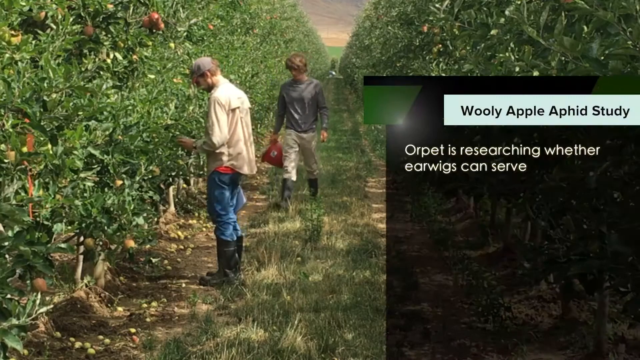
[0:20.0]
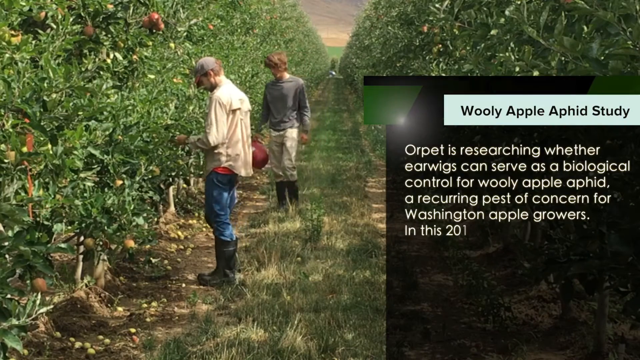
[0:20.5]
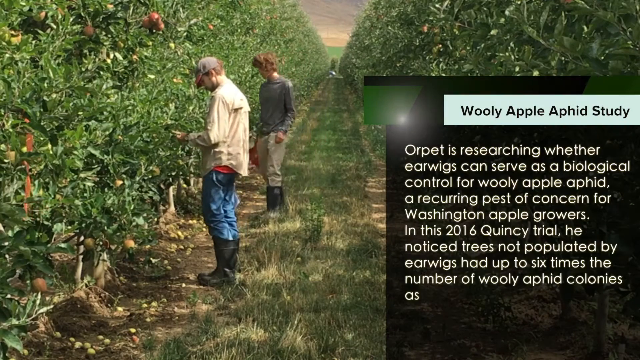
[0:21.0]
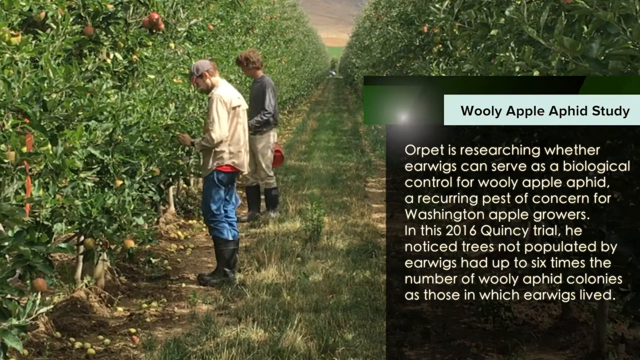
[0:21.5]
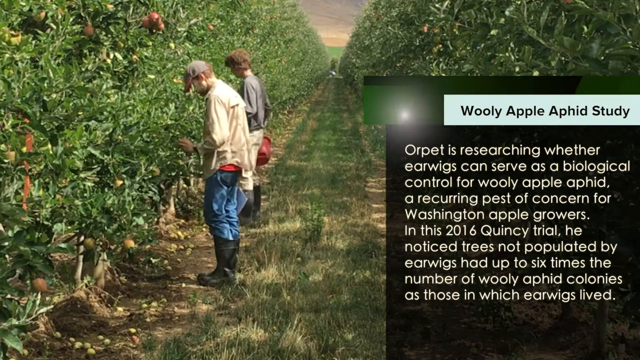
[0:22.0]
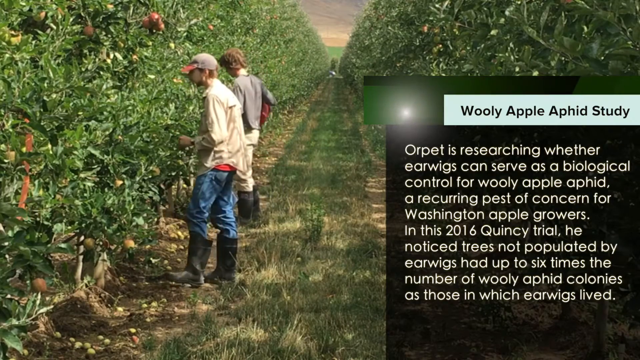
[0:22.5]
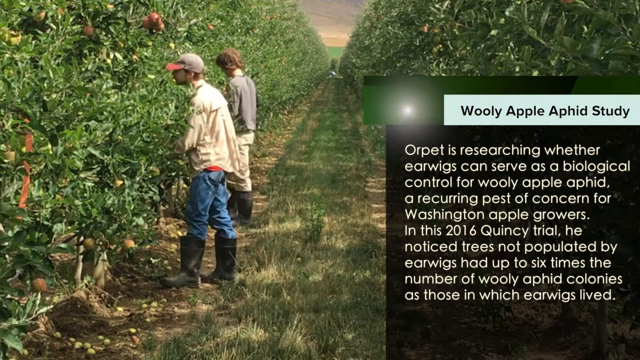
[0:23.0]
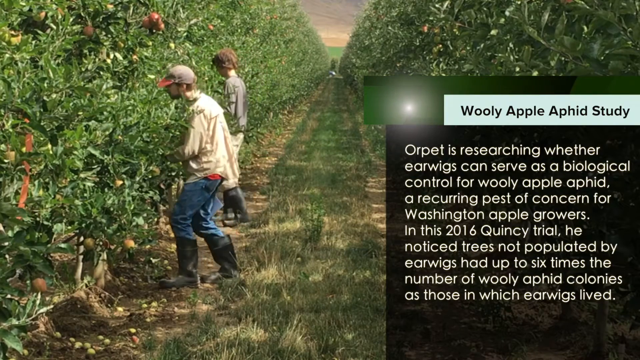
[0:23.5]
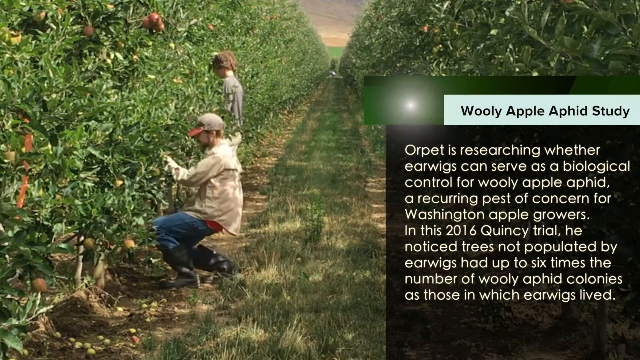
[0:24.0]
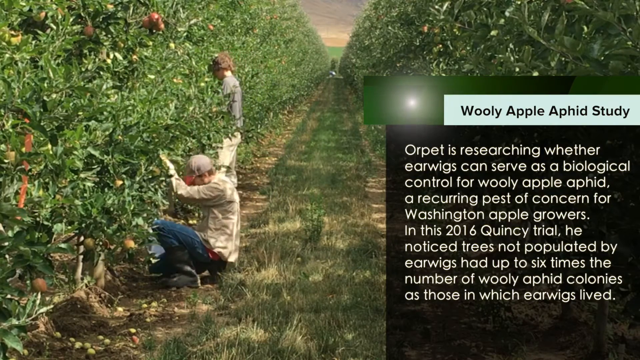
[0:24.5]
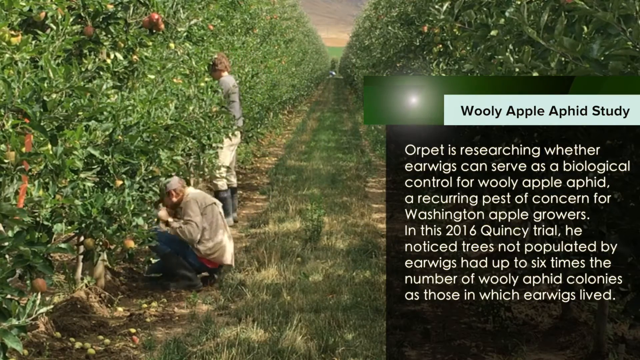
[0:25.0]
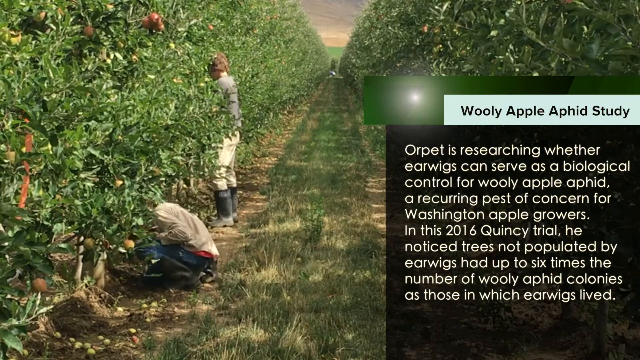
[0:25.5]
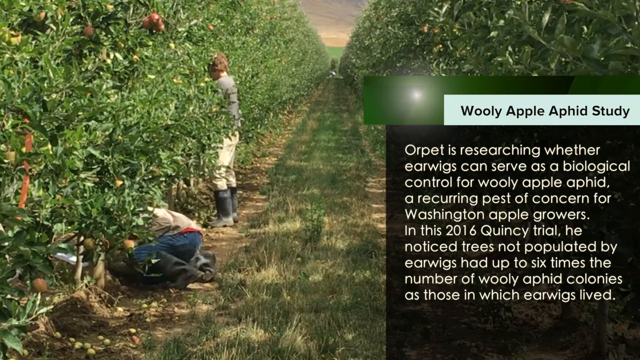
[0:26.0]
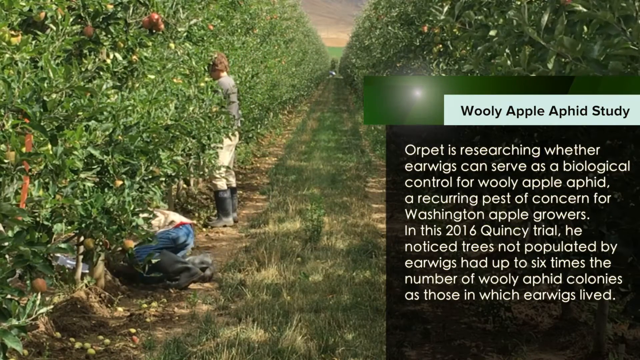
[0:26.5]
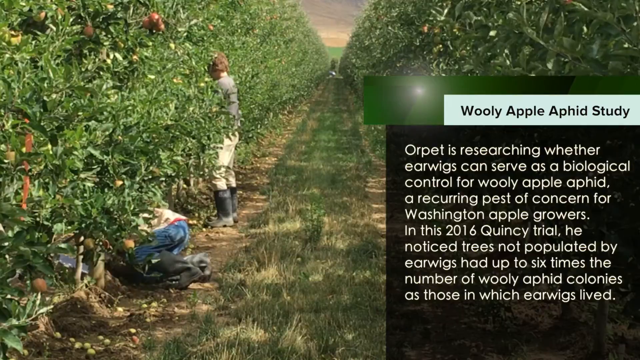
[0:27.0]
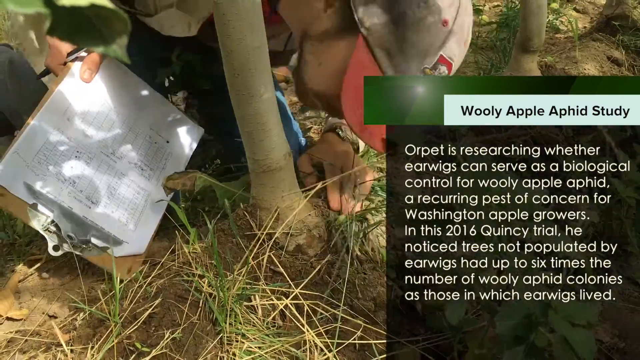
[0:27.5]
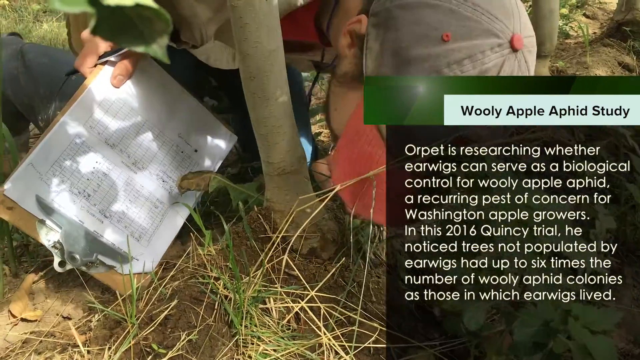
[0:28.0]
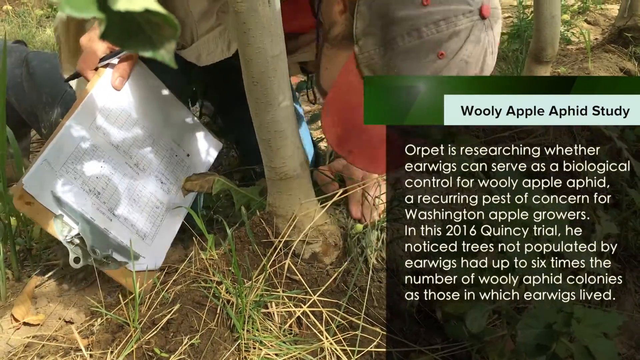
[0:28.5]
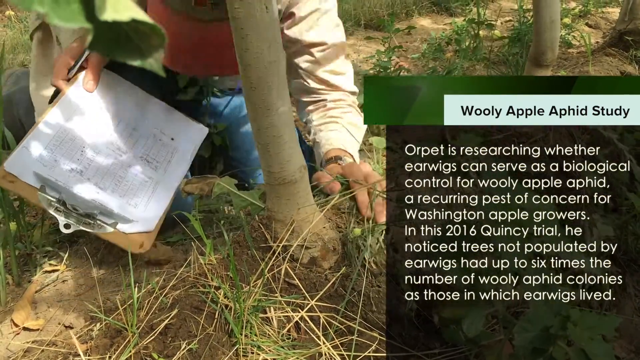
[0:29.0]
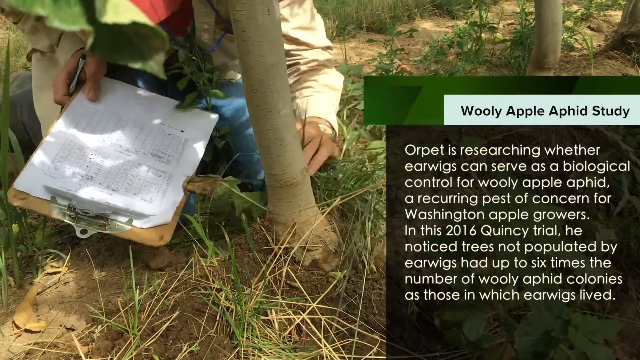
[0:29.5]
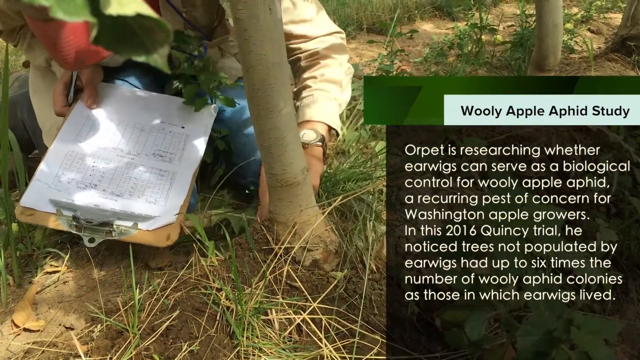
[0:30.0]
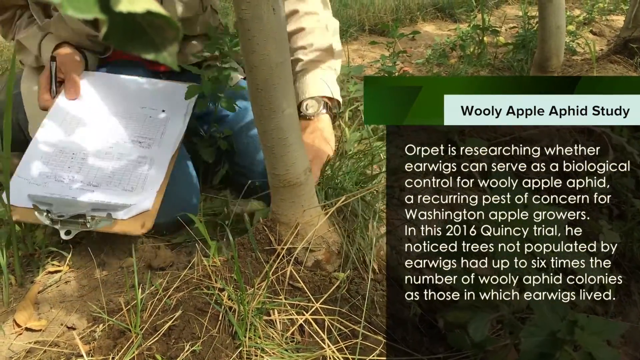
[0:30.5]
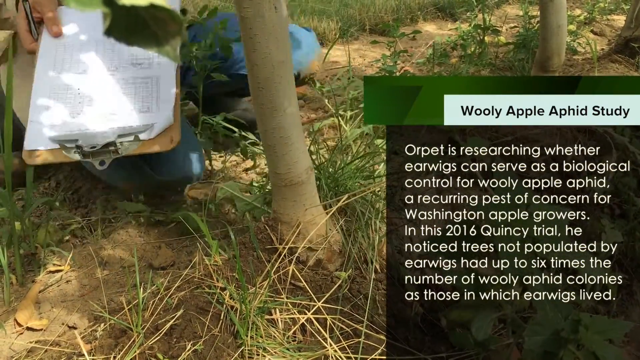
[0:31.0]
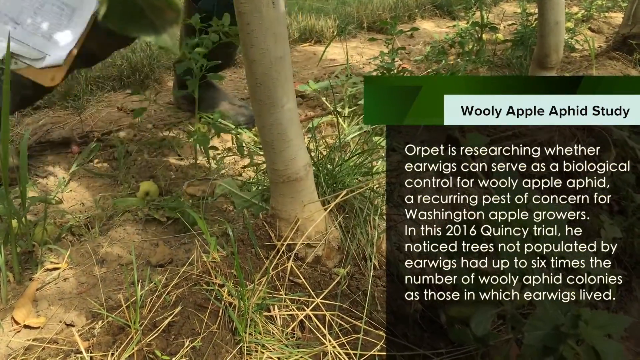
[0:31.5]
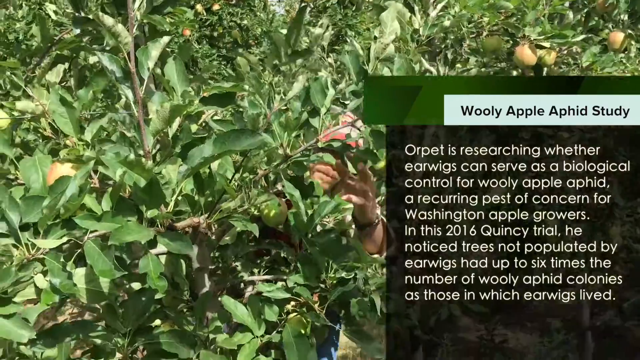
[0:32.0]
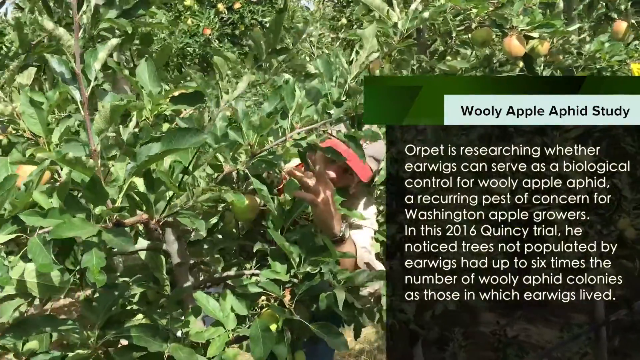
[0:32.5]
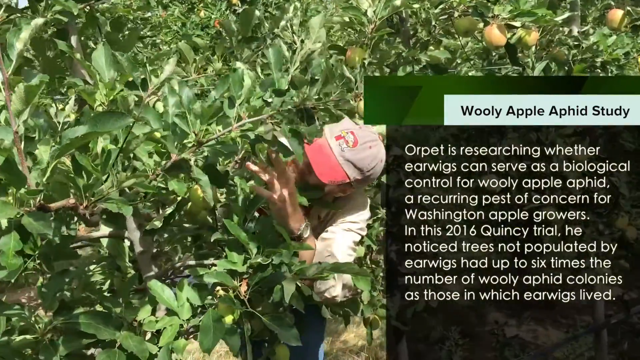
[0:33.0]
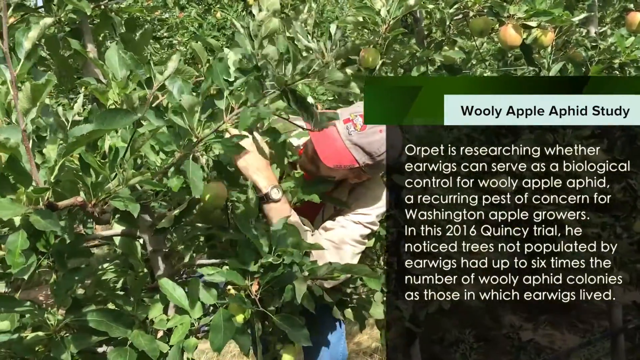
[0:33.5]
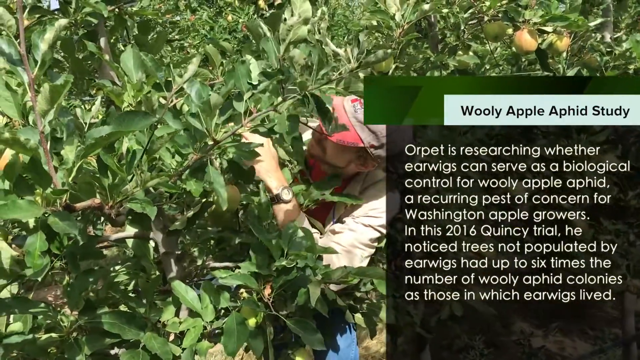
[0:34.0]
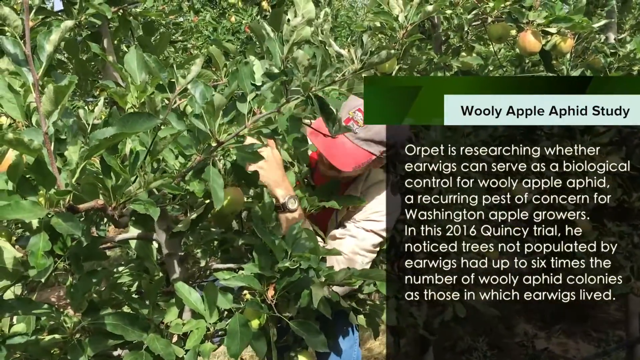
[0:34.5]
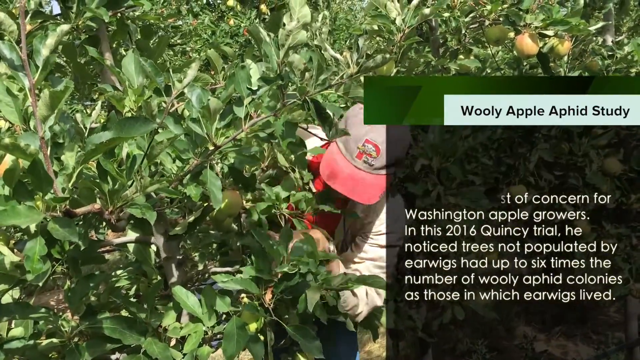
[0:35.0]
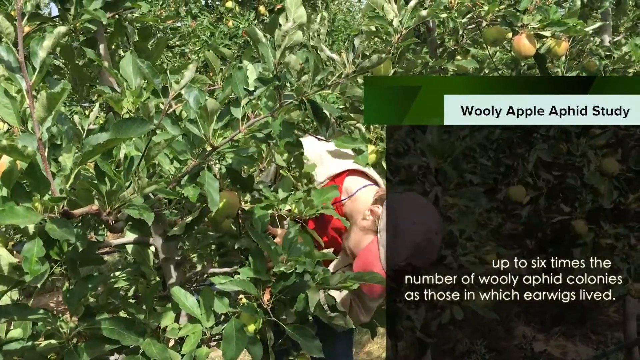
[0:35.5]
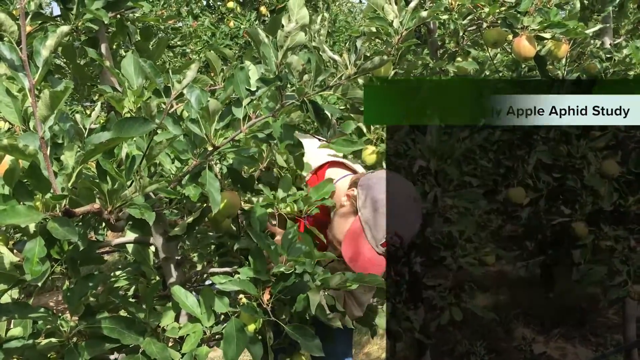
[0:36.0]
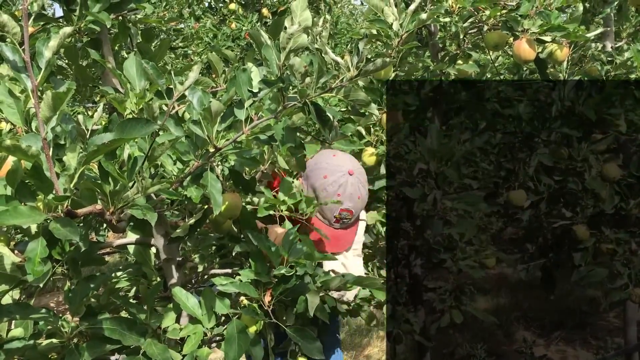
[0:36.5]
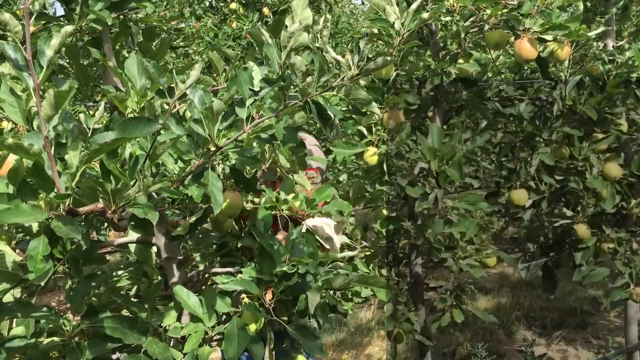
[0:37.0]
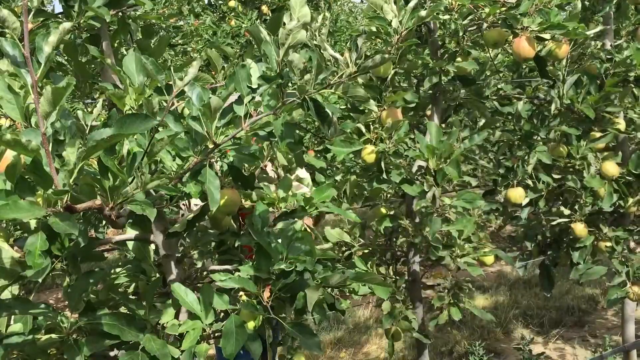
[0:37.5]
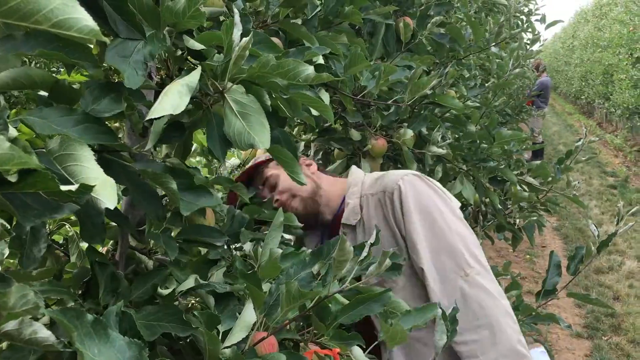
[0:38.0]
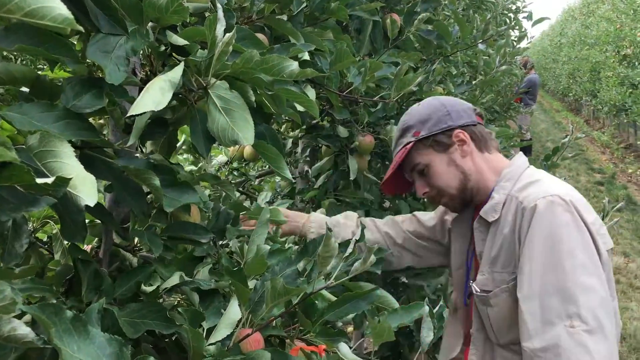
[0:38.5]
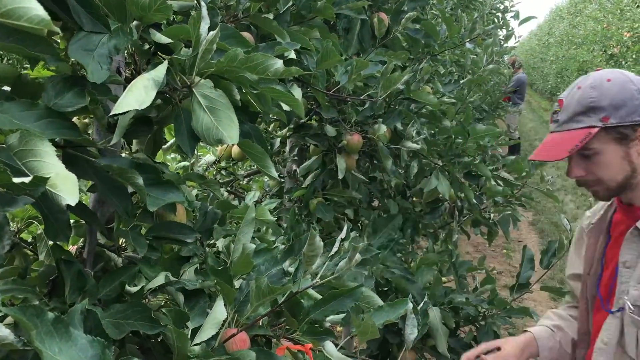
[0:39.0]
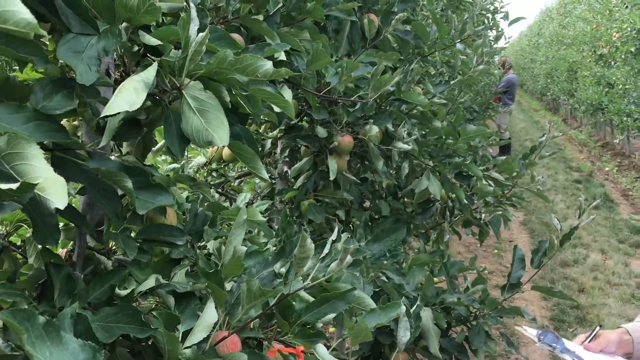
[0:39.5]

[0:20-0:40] The man who was interviewed stands looking at an object he is holding, facing a left-hand row of trees, joined by another man behind him doing the same. On the right-hand side of the screen is a dark graphic section, with black writing in a white rectangular box saying 'Wooly Apple Aphid Study'. White text underneath appears rapidly, word by word: 'Orpet is researching whether earwigs can serve as a biological control for wooly apple aphid, a recurring pest of concern for Washington apple growers. In this 2016 Quincy trial, he noticed trees not populated by earwigs had up to six times the number of wooly aphid colonies as those in which earwigs lived'. Meanwhile the man crouches down and crawls underneath some of the trees. A cut shows him in close-up at the base of one of the trees, crouching down toward the camera with the tree in front of him, looking over at its base, holding a clipboard and pen in his right hand. The graphic remains on the right-hand side of the screen. Having looked at the base of the tree, he stands up. Another shot, looking down from a higher angle, shows him standing and reaching through the trees toward the camera, examining them. The video then cuts to a side-on shot of his left side as he backs away from the trees and begins writing on his clipboard.